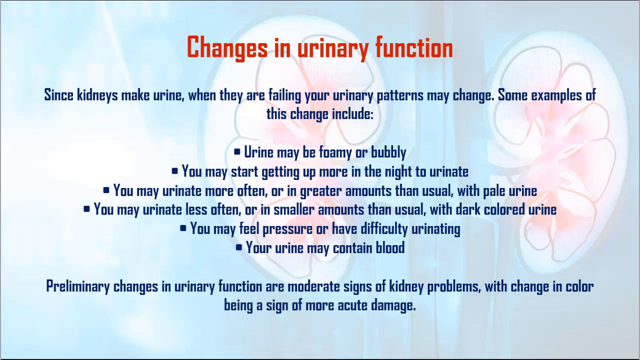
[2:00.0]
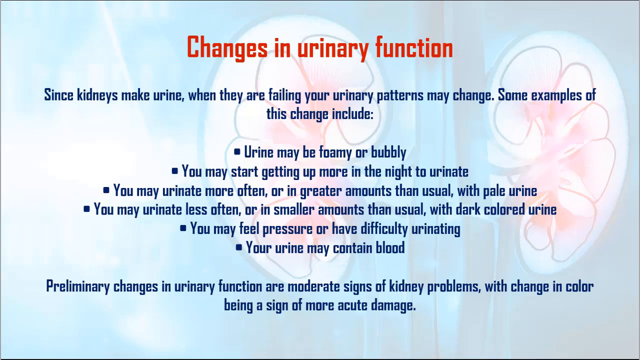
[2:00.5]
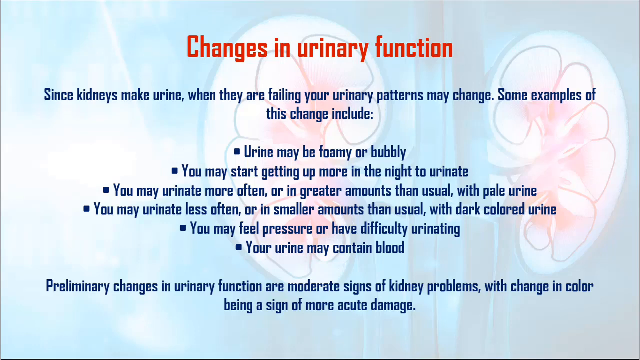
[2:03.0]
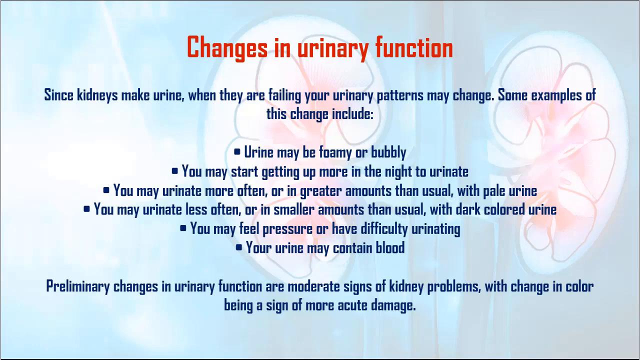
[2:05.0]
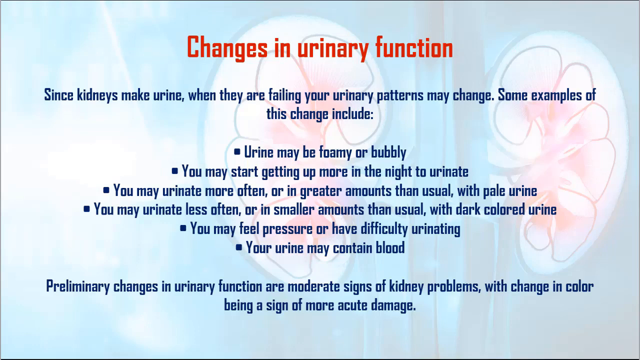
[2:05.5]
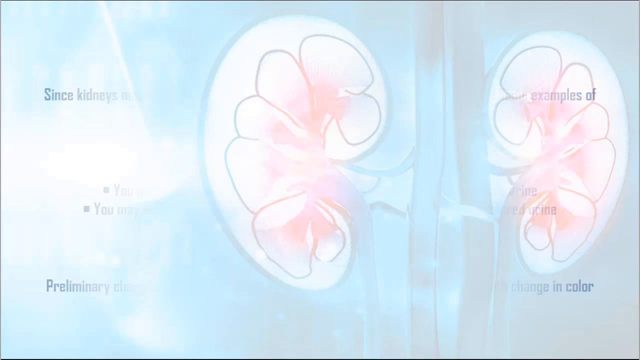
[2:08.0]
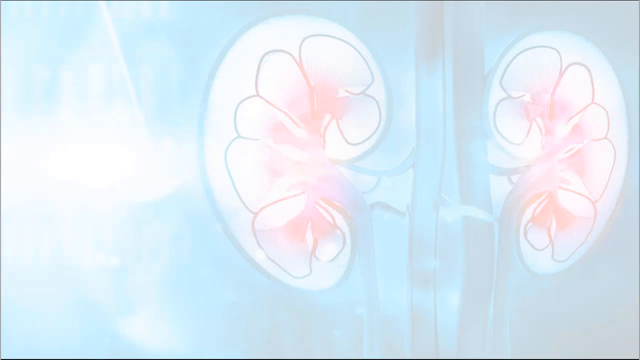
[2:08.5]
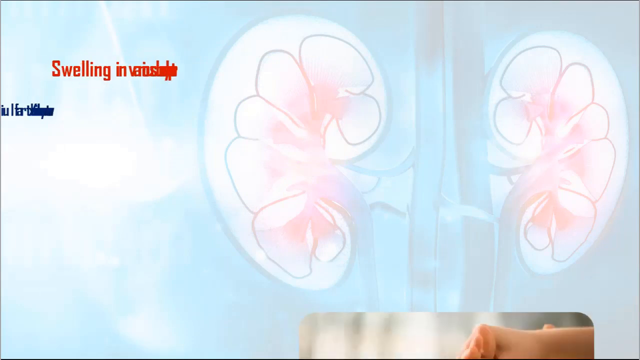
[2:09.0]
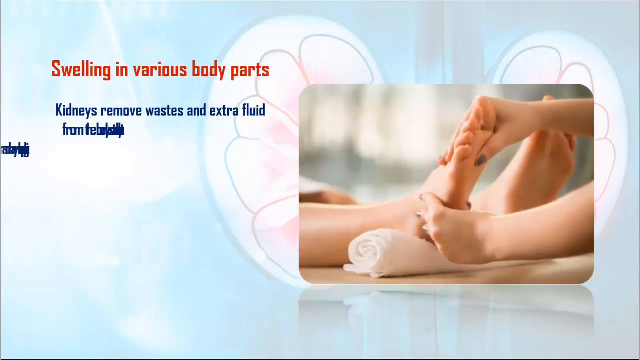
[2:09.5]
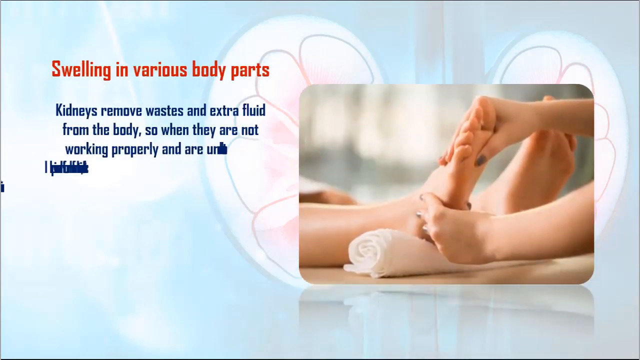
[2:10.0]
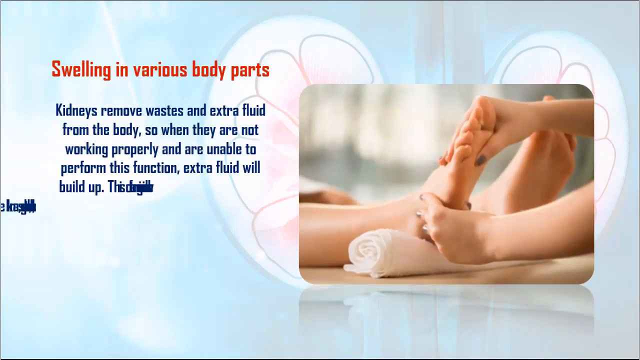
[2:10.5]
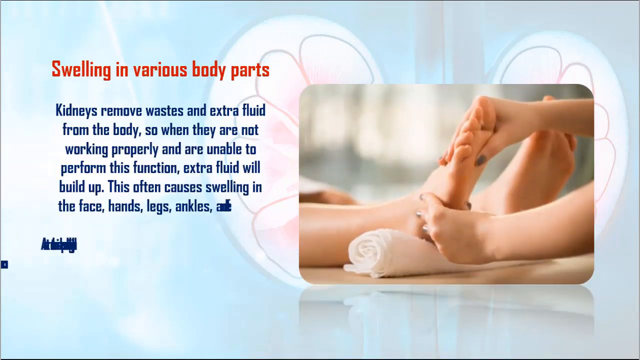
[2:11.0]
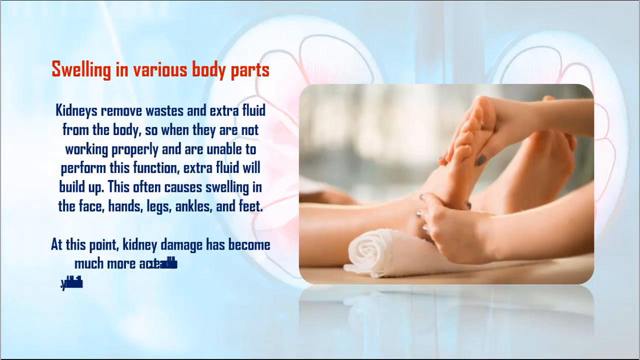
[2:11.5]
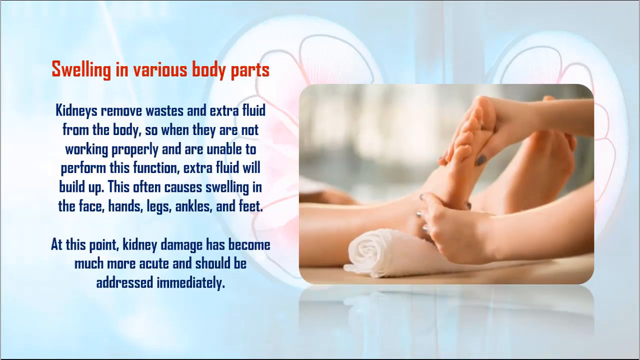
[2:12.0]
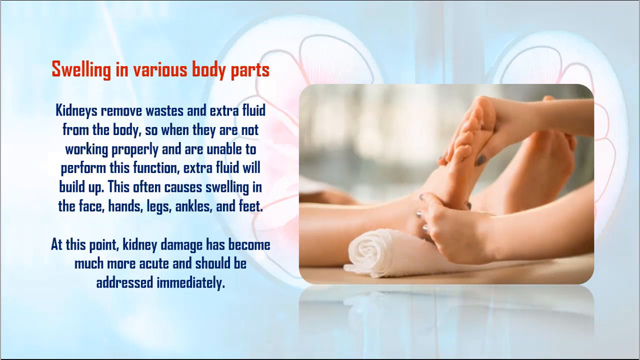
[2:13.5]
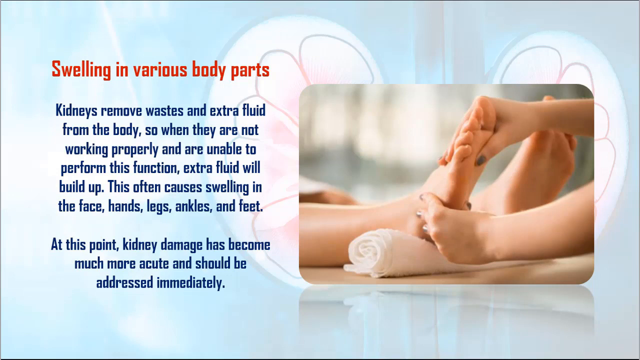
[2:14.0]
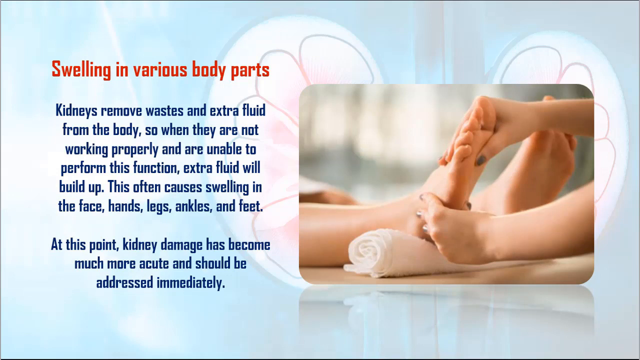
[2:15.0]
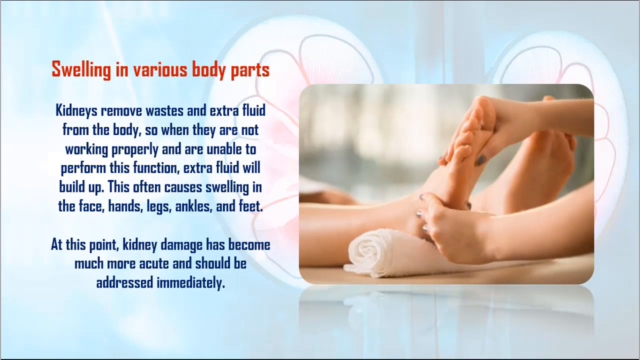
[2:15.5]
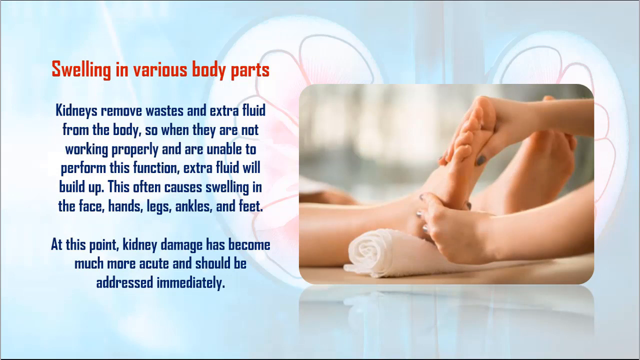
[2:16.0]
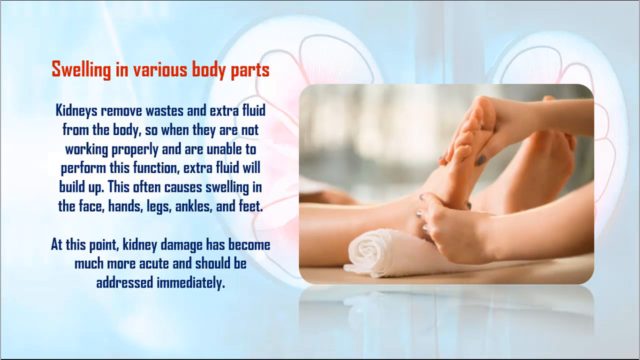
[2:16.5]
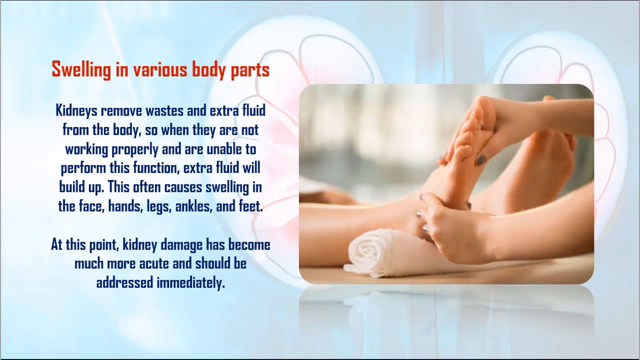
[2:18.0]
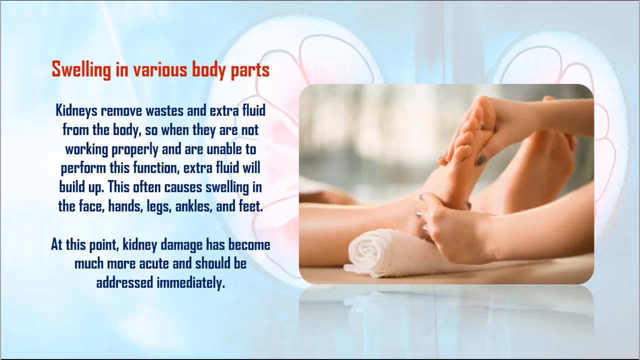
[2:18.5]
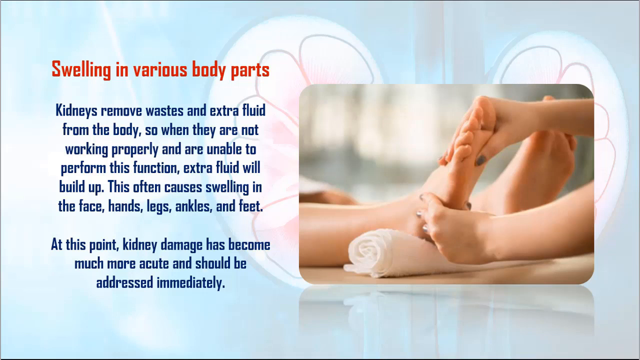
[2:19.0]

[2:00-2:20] A slide has a mostly blue background with a little white. Two drawings of kidneys are in the background; the kidneys are mostly white, each with several oval-shaped objects inside, and some pink inside those ovals. Two mostly blue tubes are between the two kidneys. On screen, text discusses how changes in urinary function may be signs of kidney damage, with bullet points in the center about different urinary behavior. The screen then shifts: the text goes away and is replaced by a picture in a rectangular box on the right. The picture shows someone's feet; the person is laying down with their feet up, the soles visible, and the feet pointing to the right side of the screen. Part of the calf of the right foot is visible. The right foot is on a white rolled-up towel, and someone is massaging it, with their right hand on the top of the foot and their left hand on the bottom near the heel. The person doing the massaging has black fingernails. To the left of the image is more text with the red title "swelling in various body parts", and below it two paragraphs explaining that kidneys remove waste and extra fluid from the body, and when they are not working properly, extra fluid builds up, which can cause swelling.